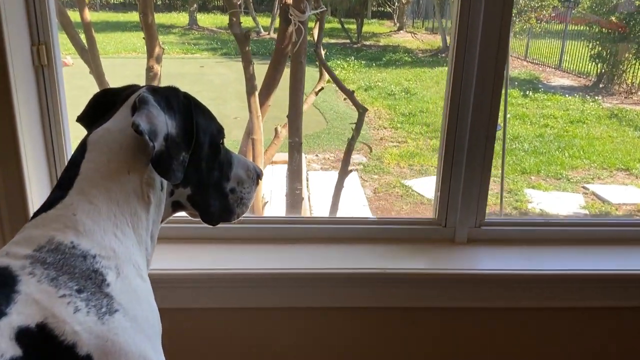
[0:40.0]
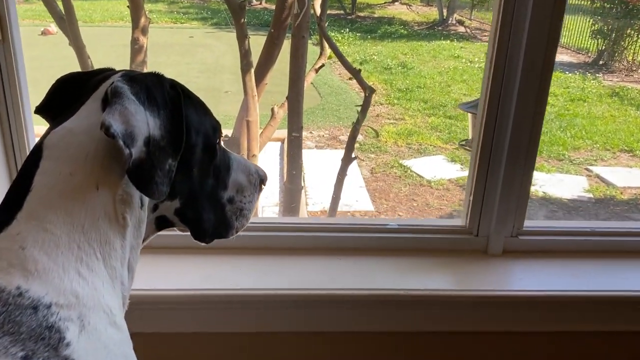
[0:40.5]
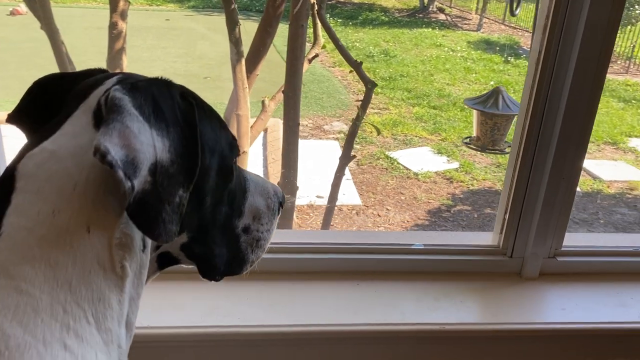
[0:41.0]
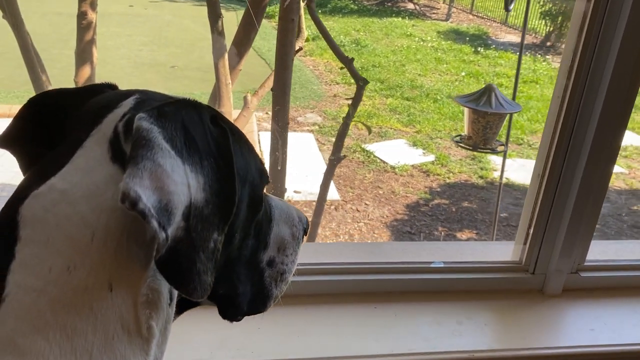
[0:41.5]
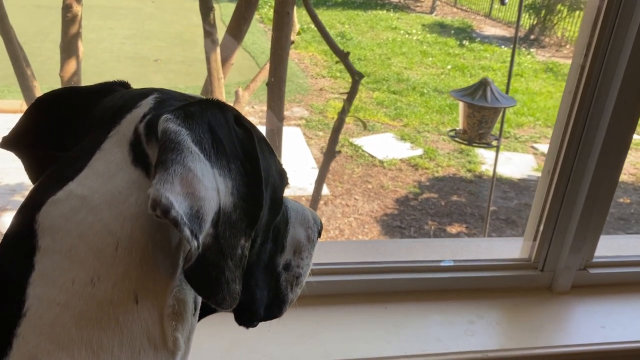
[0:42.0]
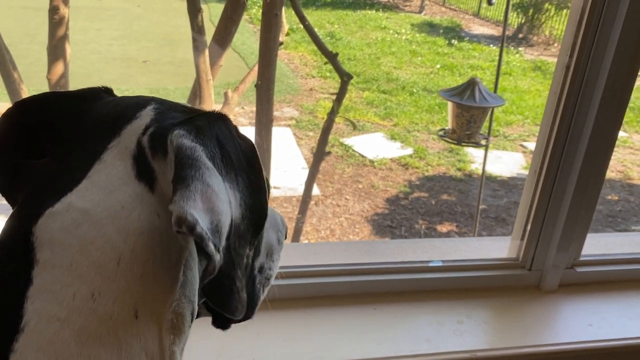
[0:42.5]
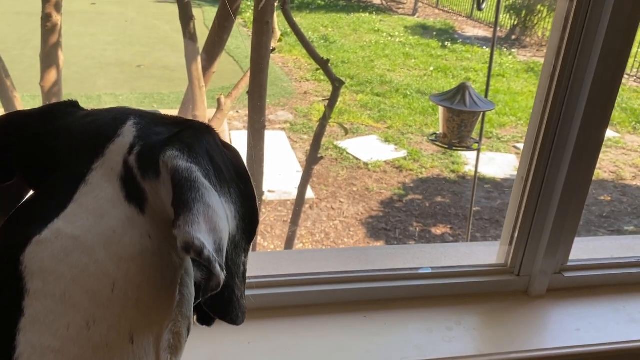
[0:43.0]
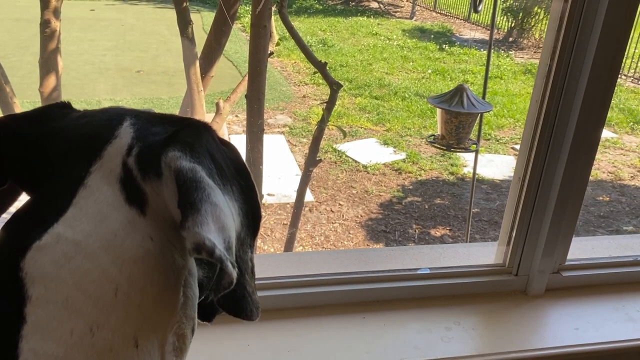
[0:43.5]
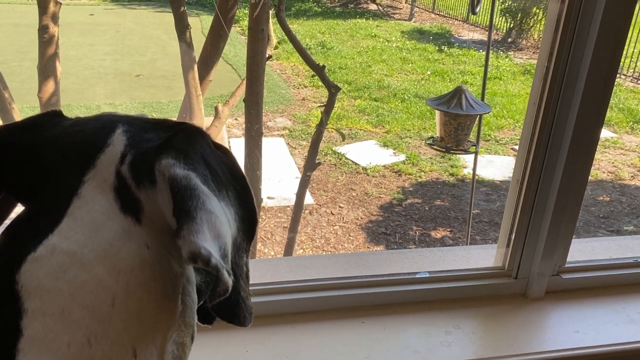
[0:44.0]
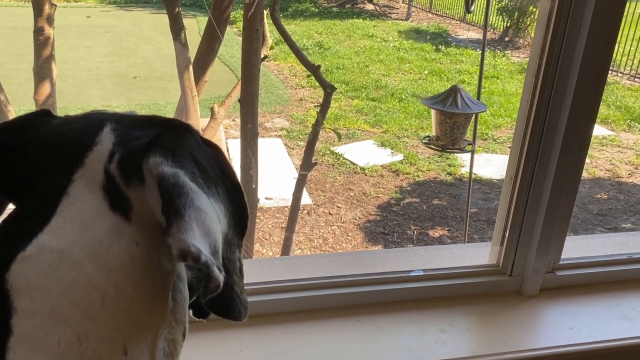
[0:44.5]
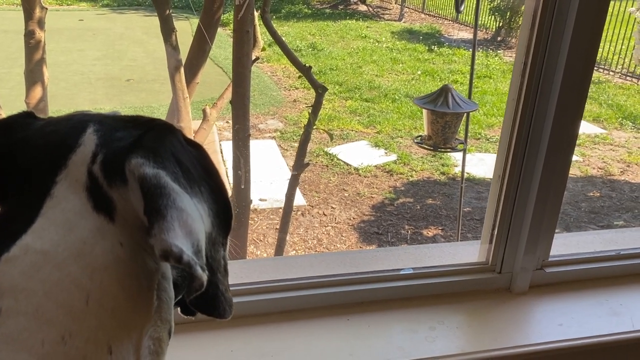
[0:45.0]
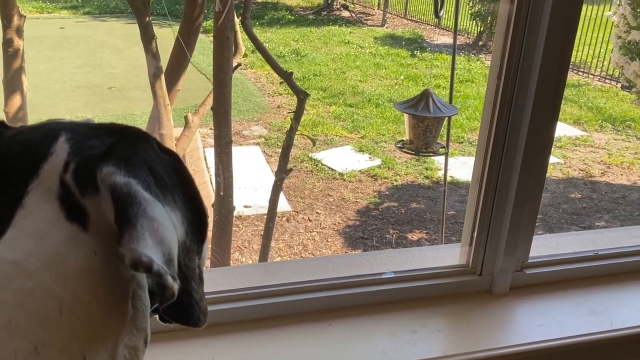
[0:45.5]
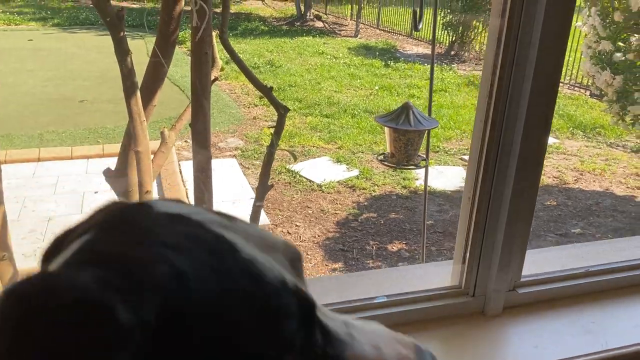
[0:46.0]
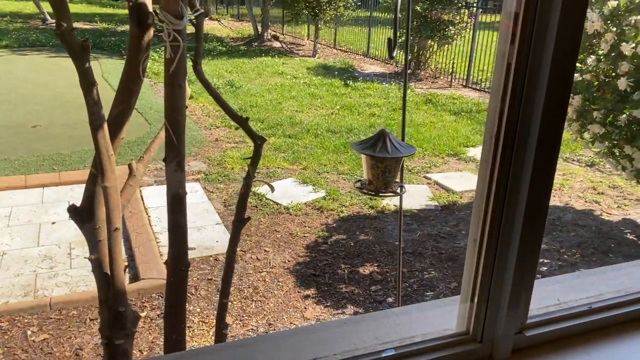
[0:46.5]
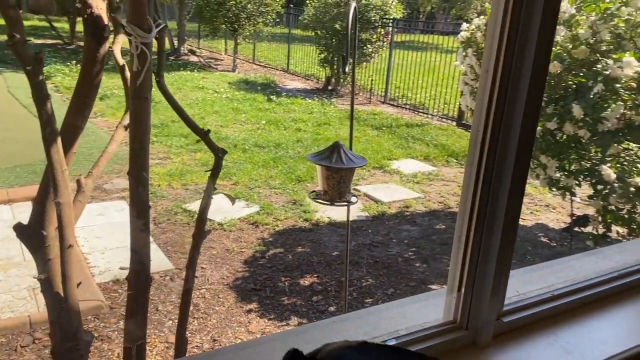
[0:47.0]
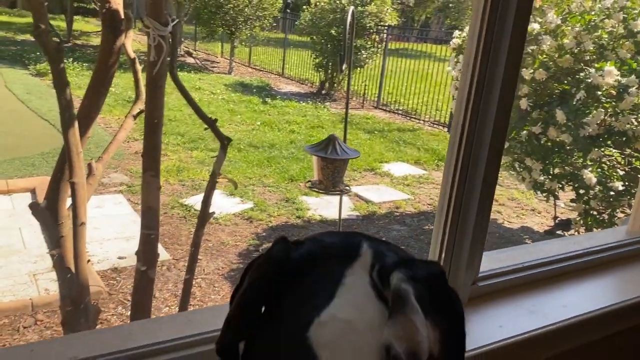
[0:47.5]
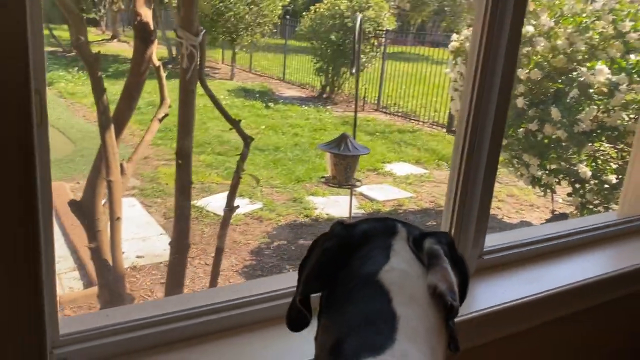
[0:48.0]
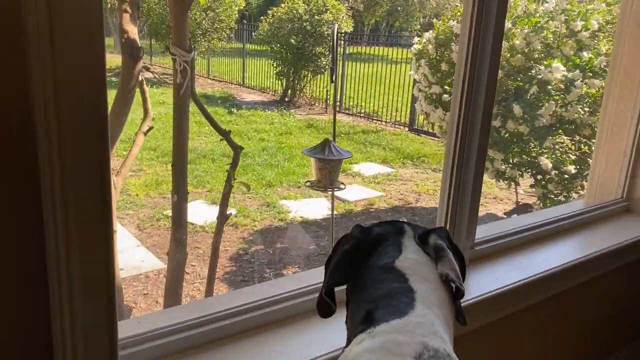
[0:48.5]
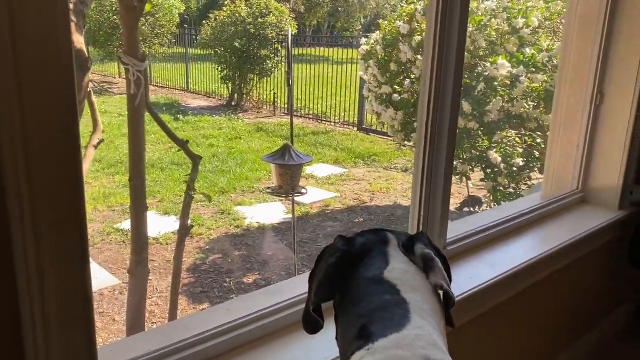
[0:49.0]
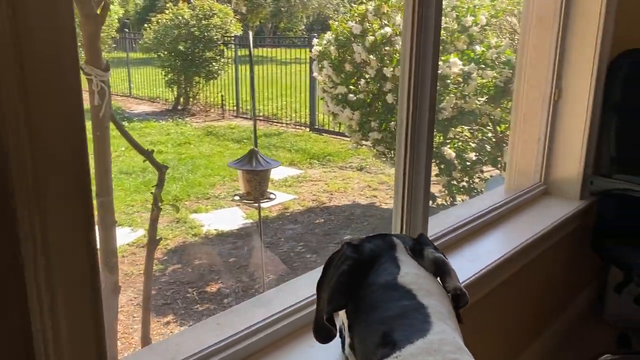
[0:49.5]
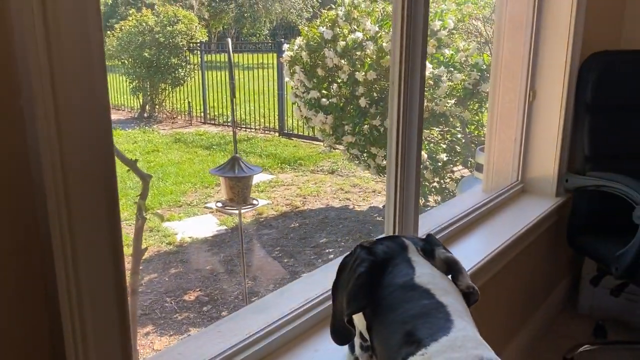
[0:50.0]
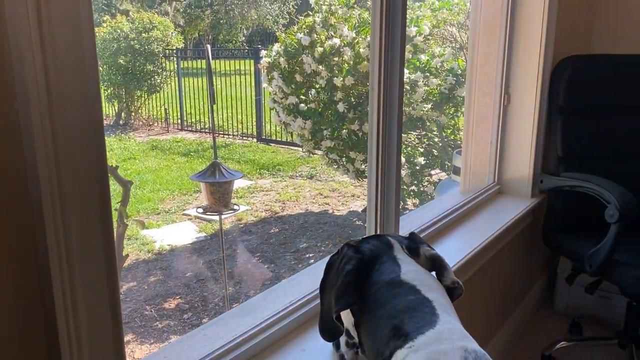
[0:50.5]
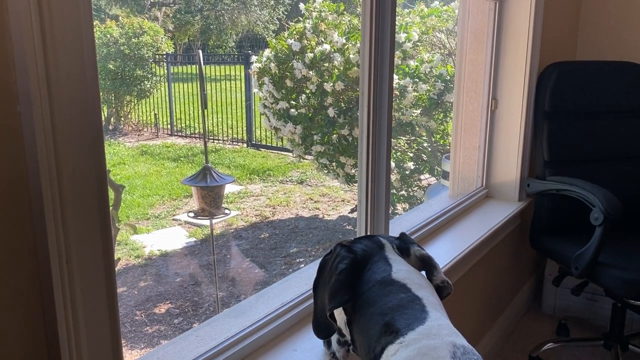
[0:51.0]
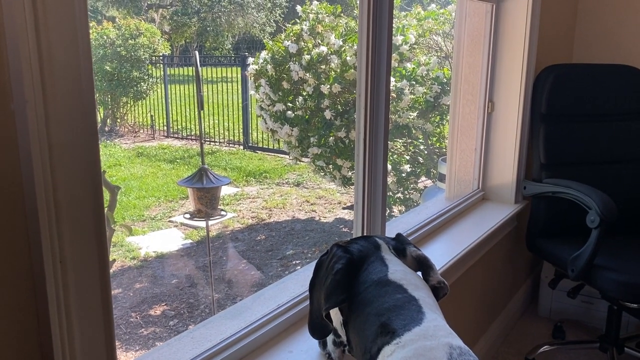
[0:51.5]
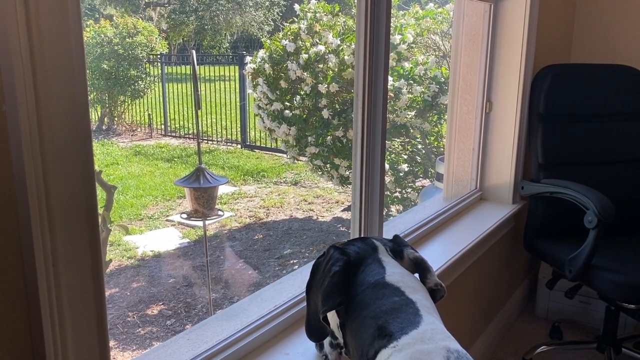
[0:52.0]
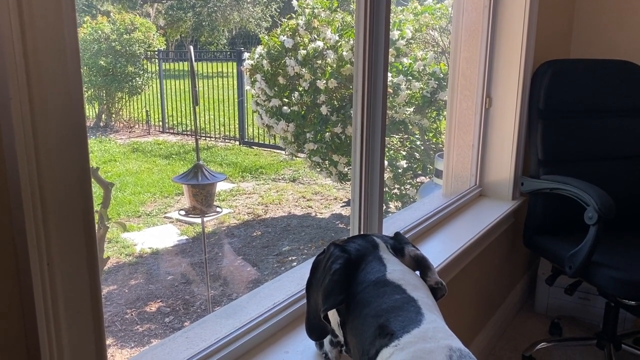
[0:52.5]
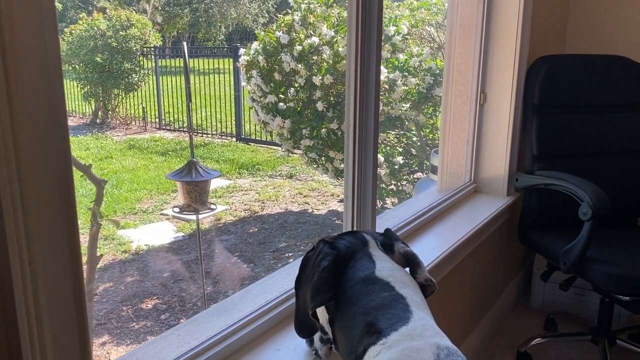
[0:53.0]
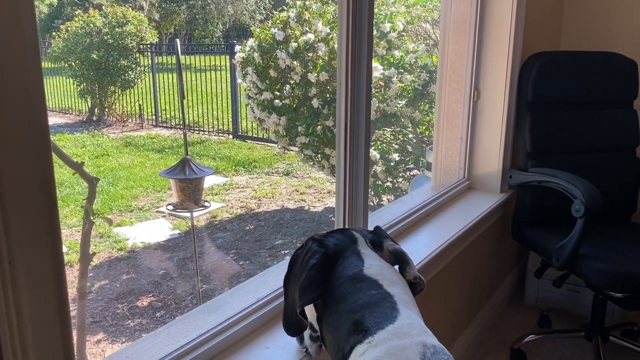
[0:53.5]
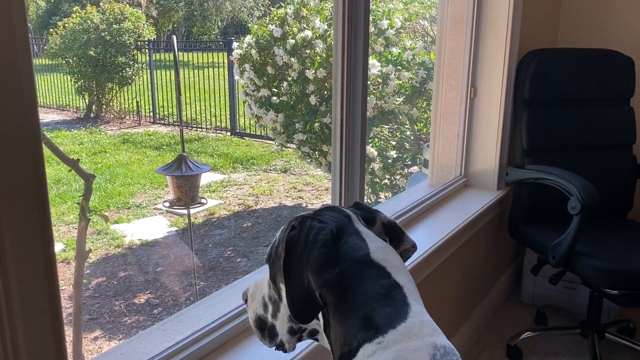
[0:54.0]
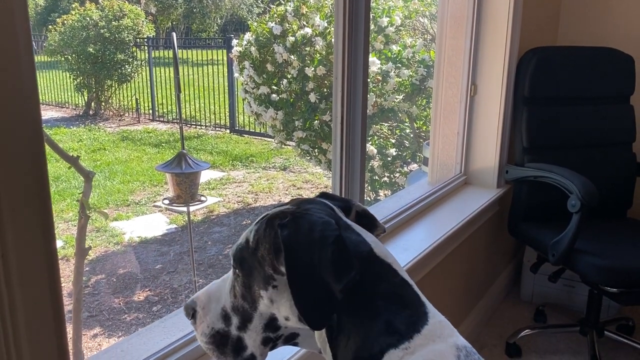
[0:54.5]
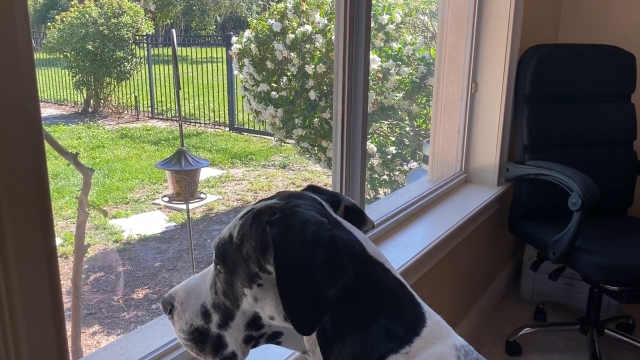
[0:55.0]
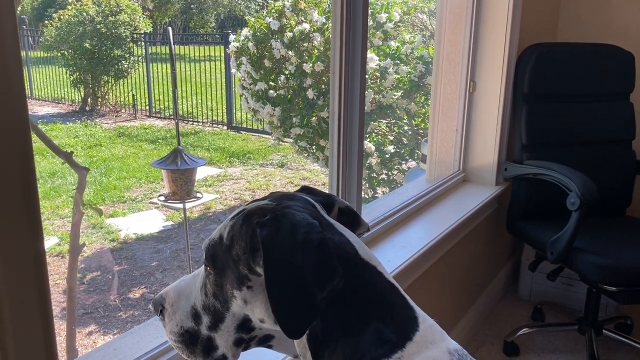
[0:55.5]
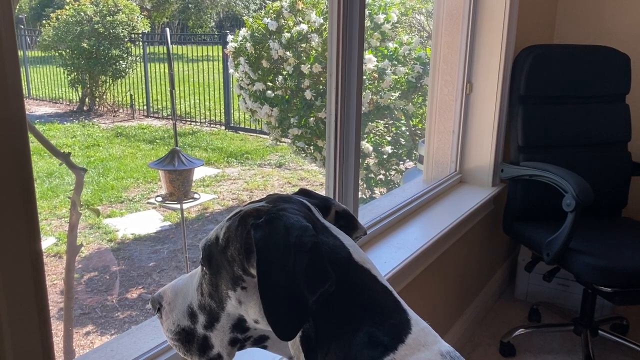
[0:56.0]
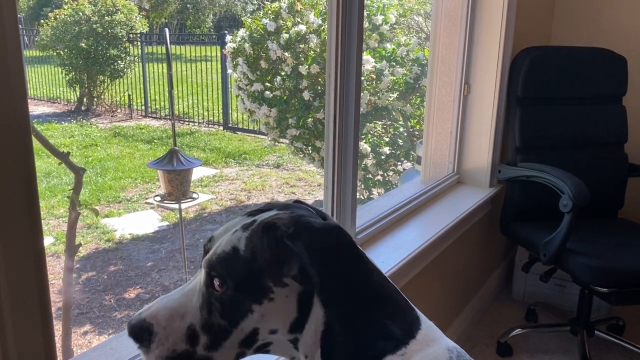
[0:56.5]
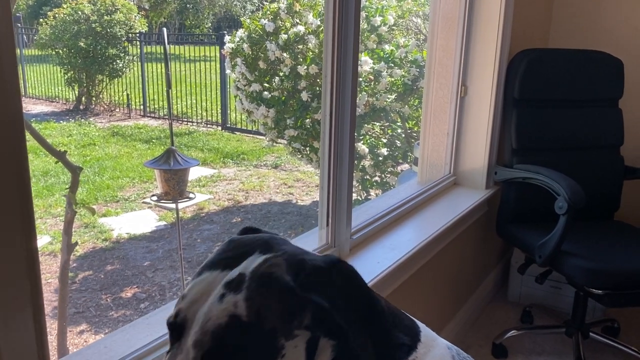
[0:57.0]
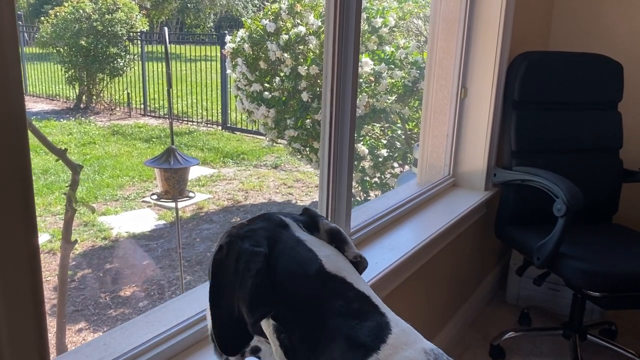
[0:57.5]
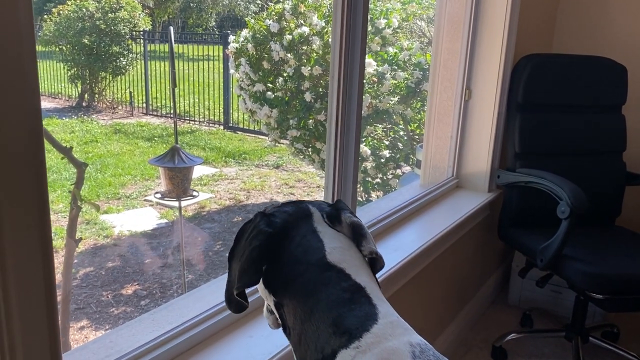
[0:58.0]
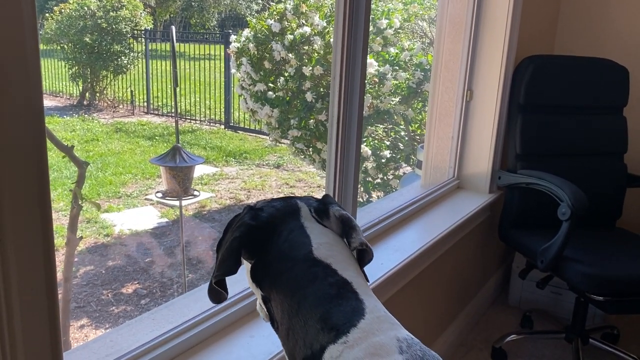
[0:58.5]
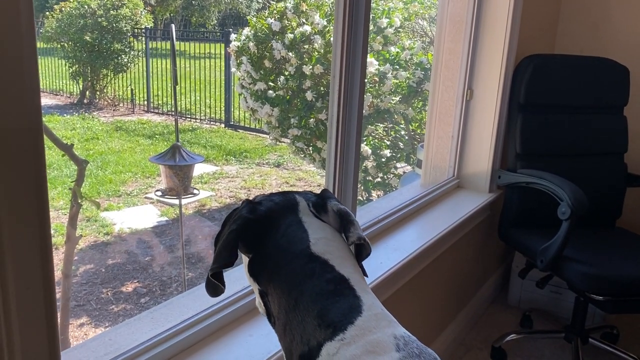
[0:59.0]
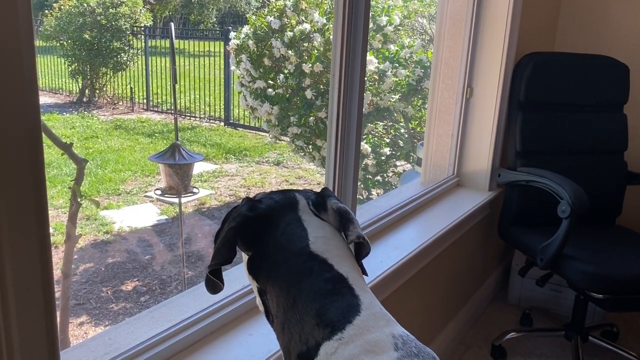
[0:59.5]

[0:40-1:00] The concrete stepping stones are not placed in any particular way and are slanted. In the center of the yard there is what looks to be a pool cover or a very muddy area. The dog's head is still turned to the right, looking at something. The bird feeder outside the window is full of bird seed. A large bush outside the window has large white flower blooms on it. The dog's reflection is visible in the window in front of where it is looking. The fence in the backyard looks to be made of metal and is black. The other bushes in the yard do not have any flowers on them except for one. The dog is looking back around the yard and seems to still be investigating the area.